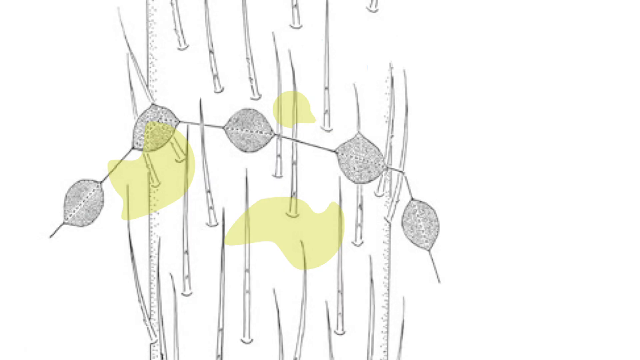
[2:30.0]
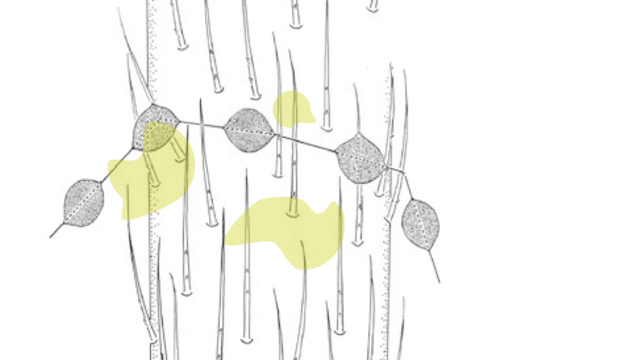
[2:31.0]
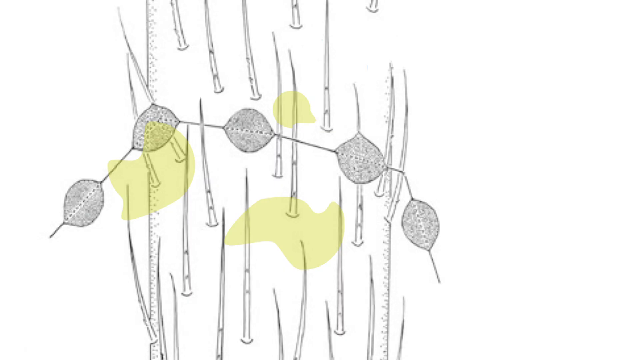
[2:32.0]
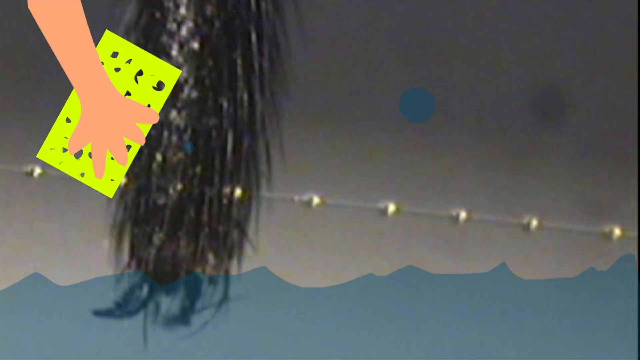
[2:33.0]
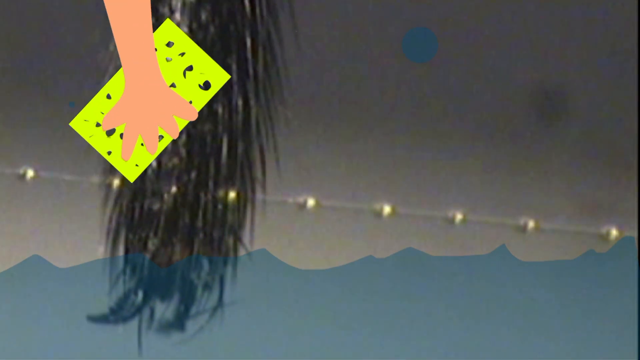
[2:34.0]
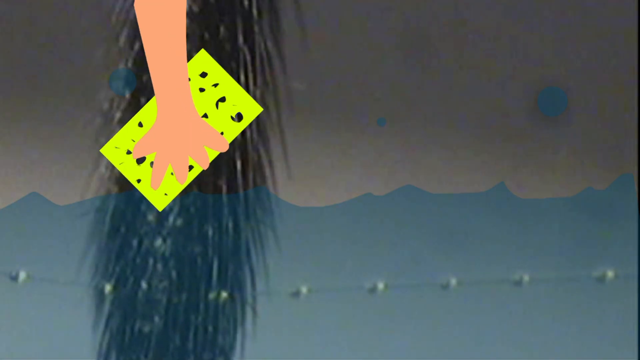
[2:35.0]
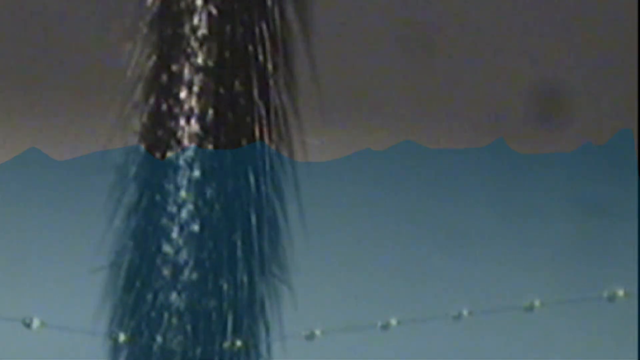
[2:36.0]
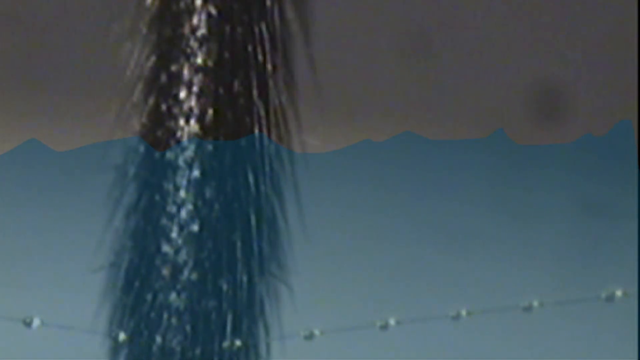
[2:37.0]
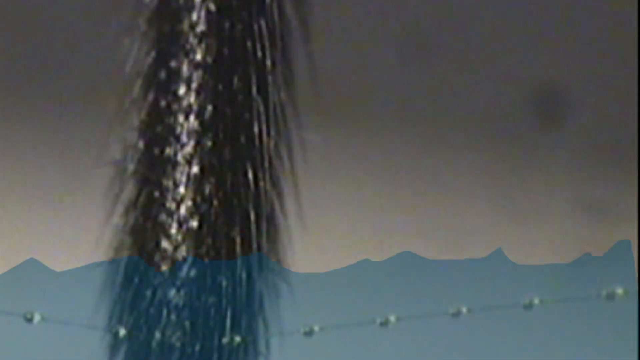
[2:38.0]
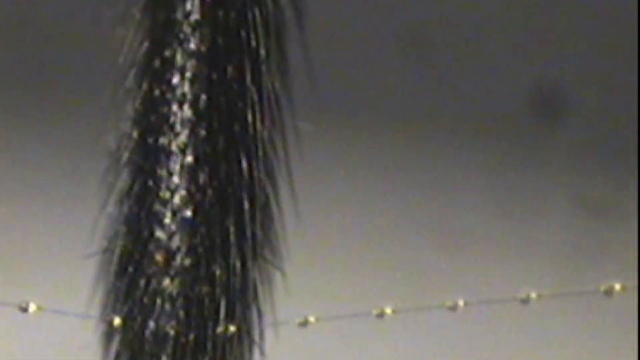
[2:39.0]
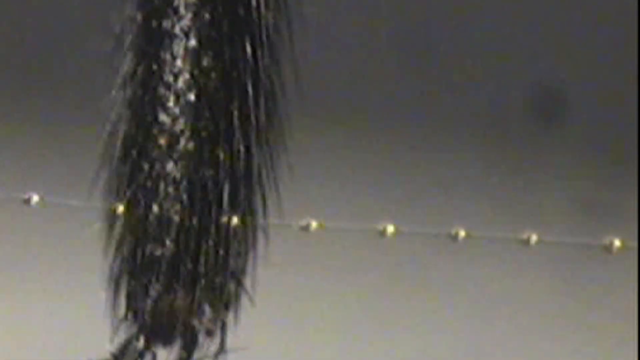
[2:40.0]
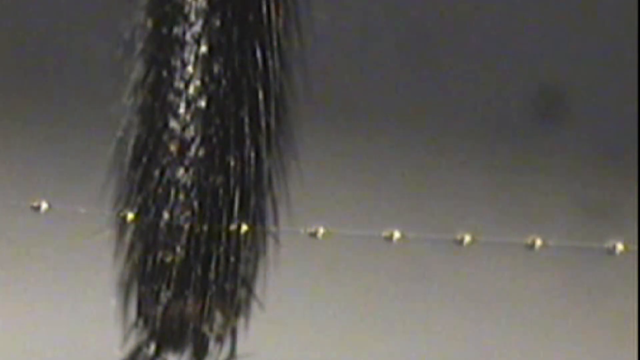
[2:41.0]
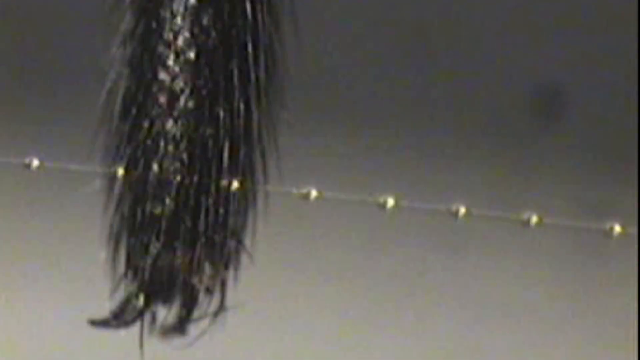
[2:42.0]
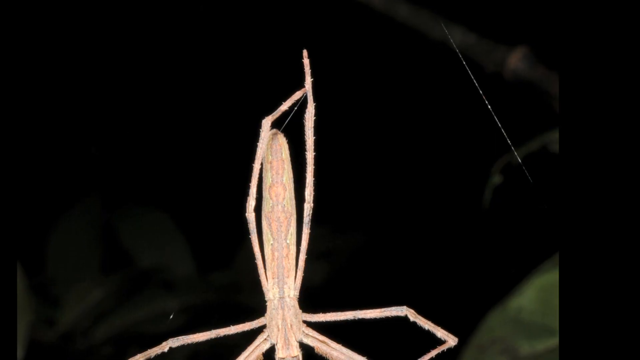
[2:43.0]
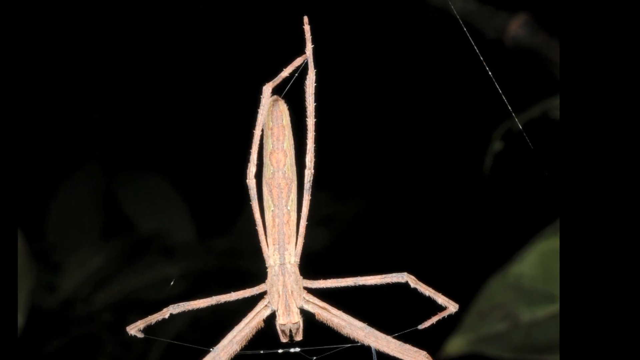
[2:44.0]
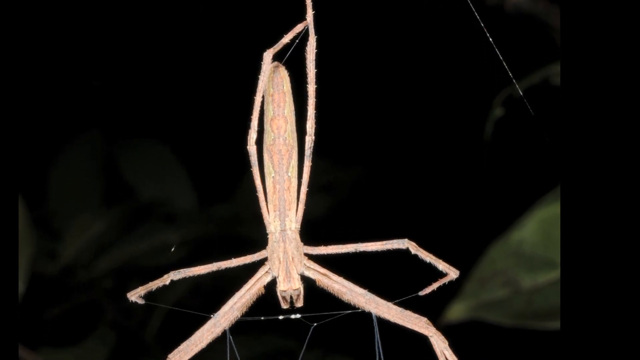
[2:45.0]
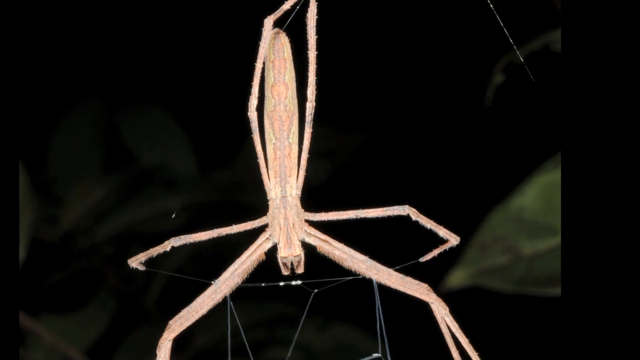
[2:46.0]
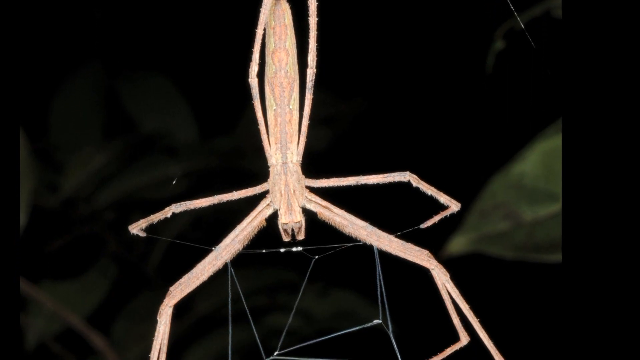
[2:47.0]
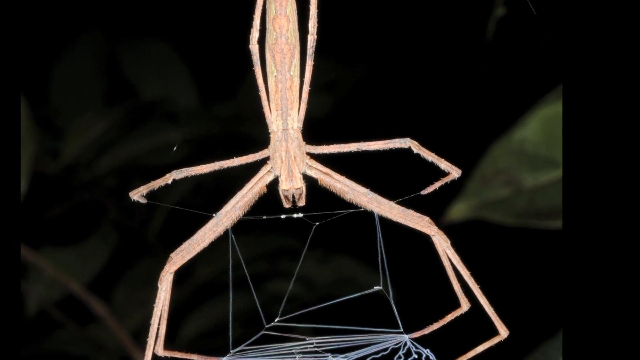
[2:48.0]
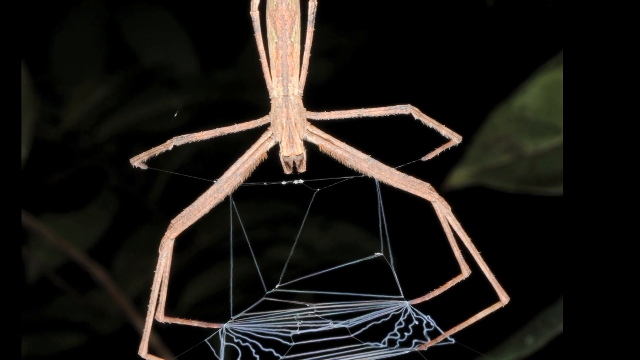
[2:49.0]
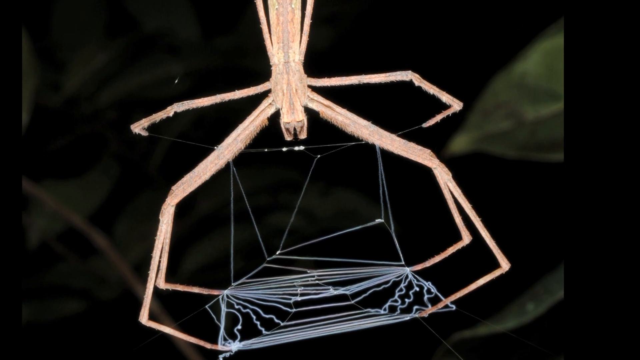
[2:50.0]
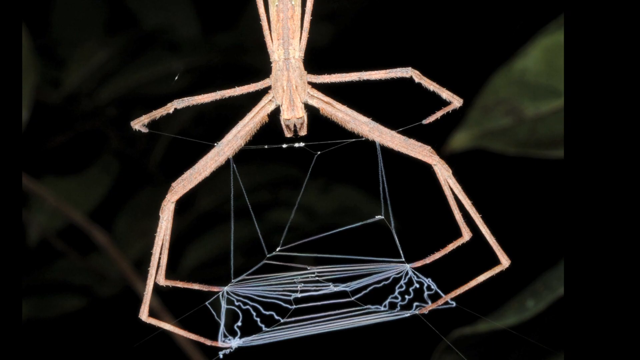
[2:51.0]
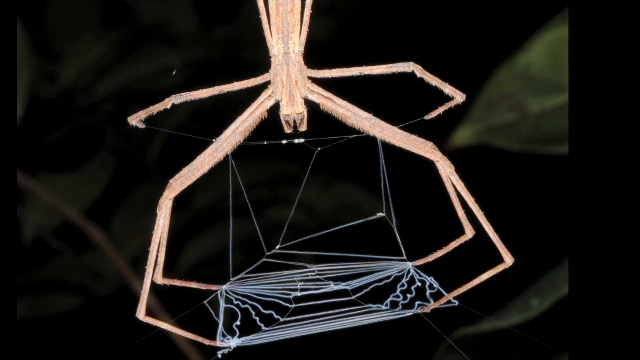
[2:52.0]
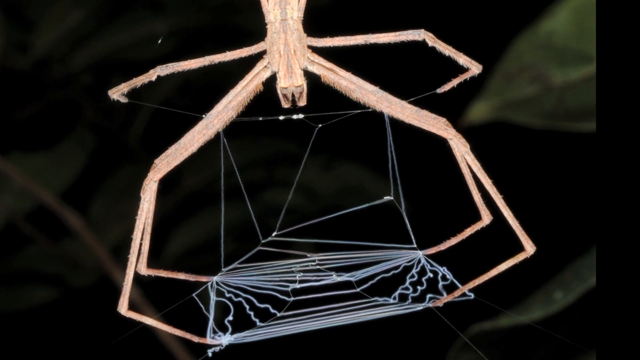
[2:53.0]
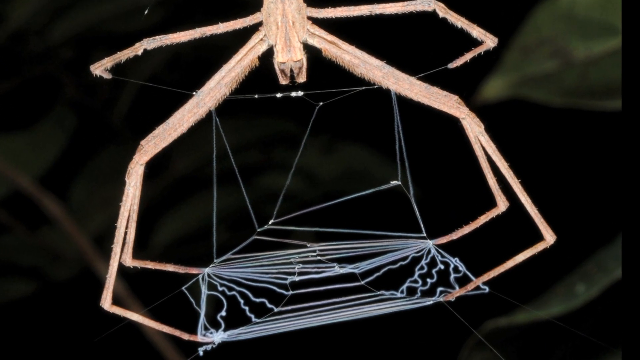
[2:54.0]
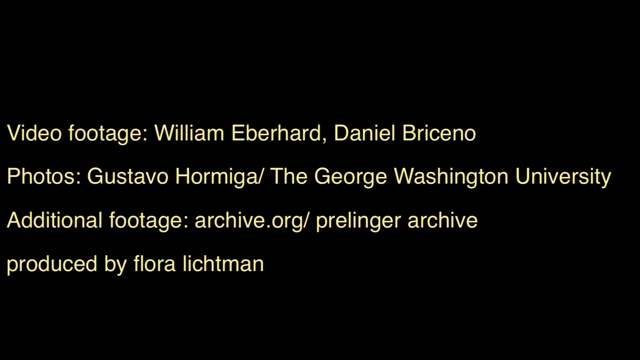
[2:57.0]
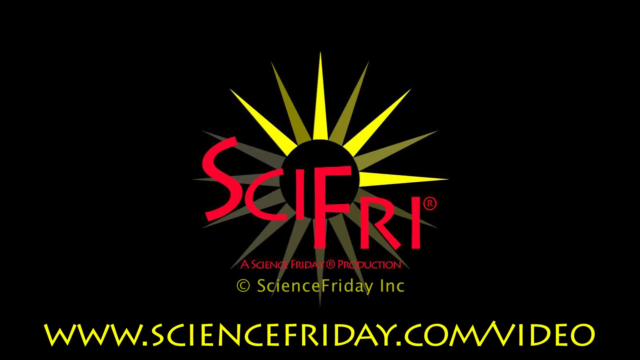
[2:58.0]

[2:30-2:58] A hand comes down and sort of washes the spider's leg, and then animated water comes up from the bottom. The focus shifts to a long, skinny pink spider with very long legs, and closer up it is spinning its web. At the end, words pop up reading "video footage, William Eberhard, Daniel Beiserno, photos, Gustavo Hormiga, the George Washington University. Additional footage, archive.org, Prelinger Archive, produced by Flora Lichten." Finally an emblem appears reading "Sci-Fry" in red font along with "copyright Science Friday Incorporated". Streaks that almost look like they come out of the word are mostly yellow, also yellowish gray, and mostly gray at the bottom.